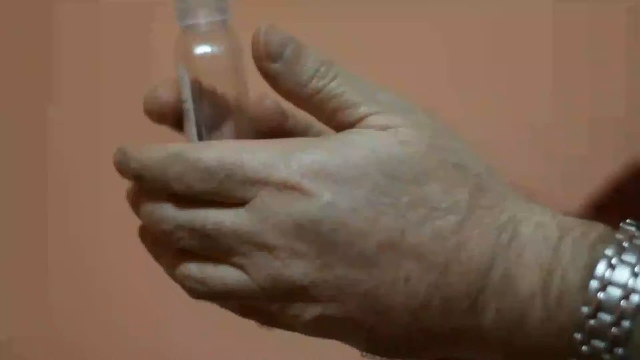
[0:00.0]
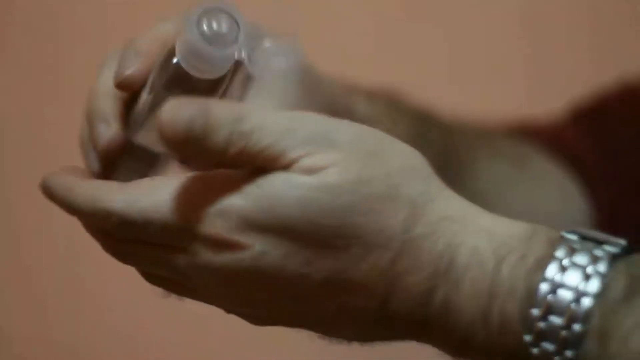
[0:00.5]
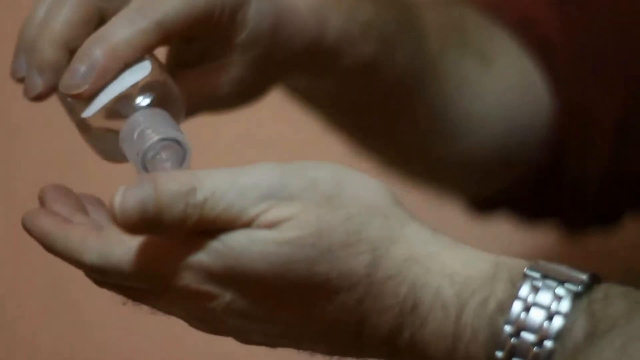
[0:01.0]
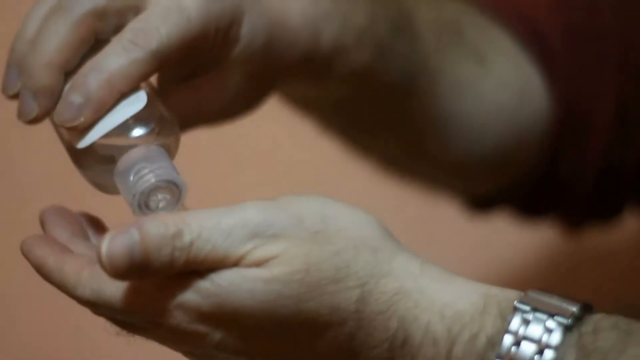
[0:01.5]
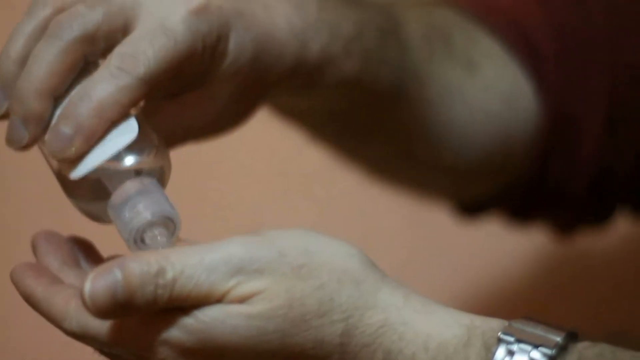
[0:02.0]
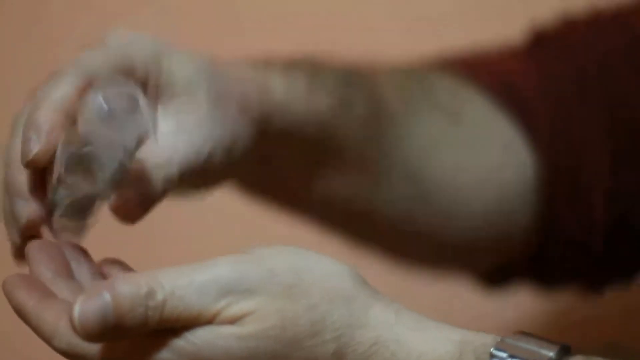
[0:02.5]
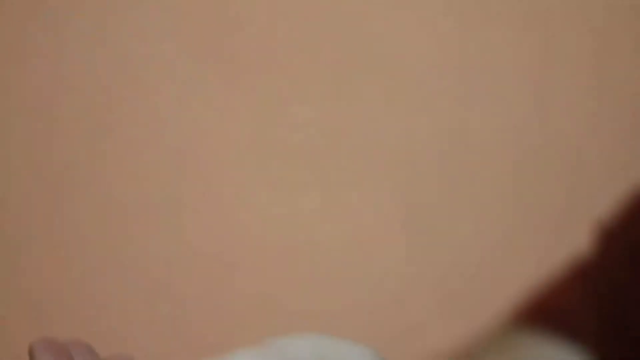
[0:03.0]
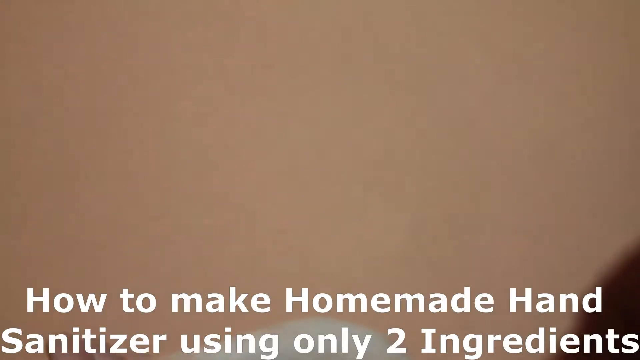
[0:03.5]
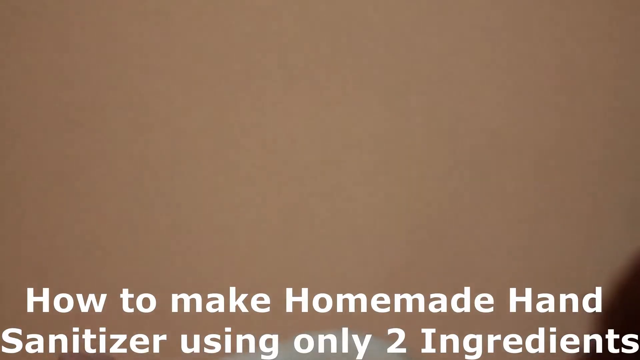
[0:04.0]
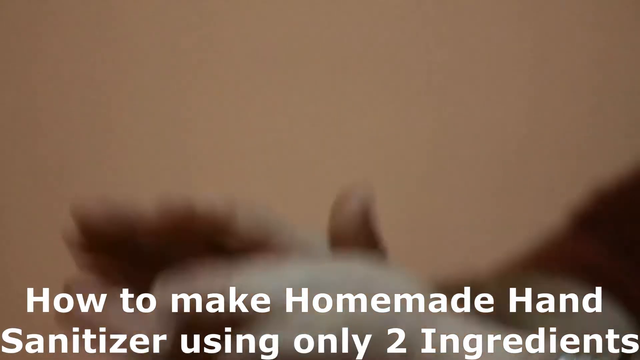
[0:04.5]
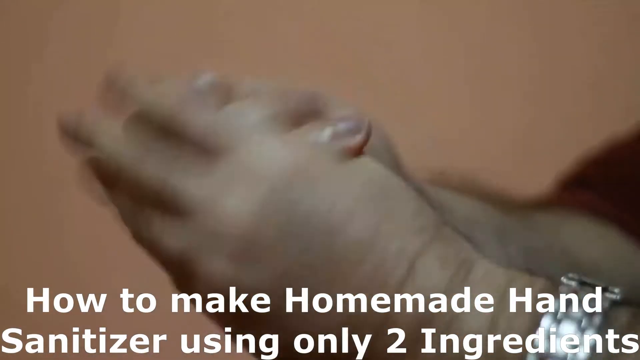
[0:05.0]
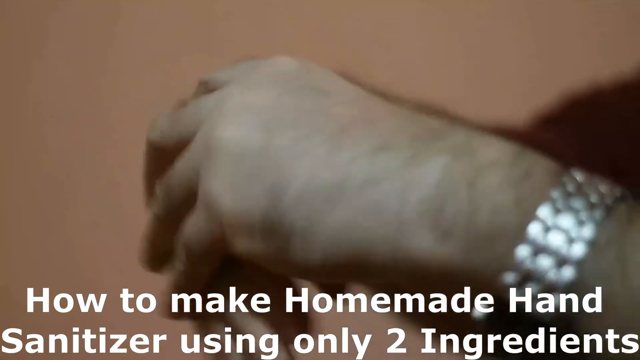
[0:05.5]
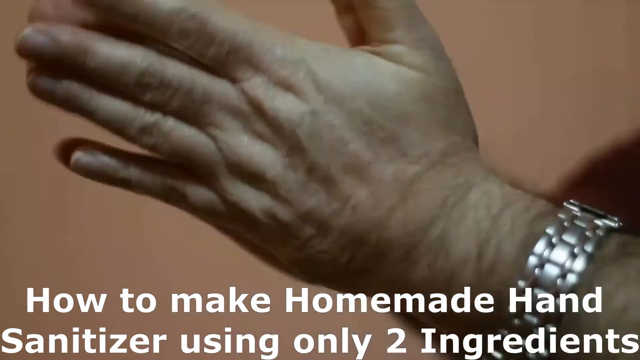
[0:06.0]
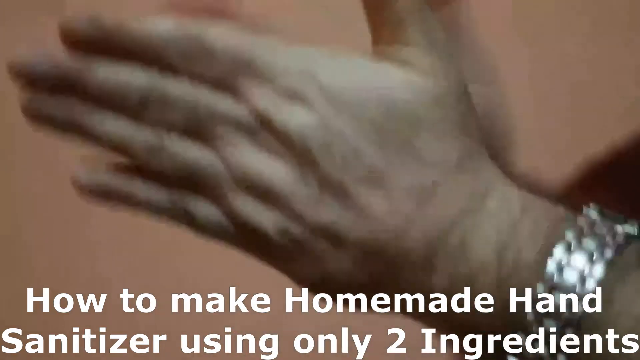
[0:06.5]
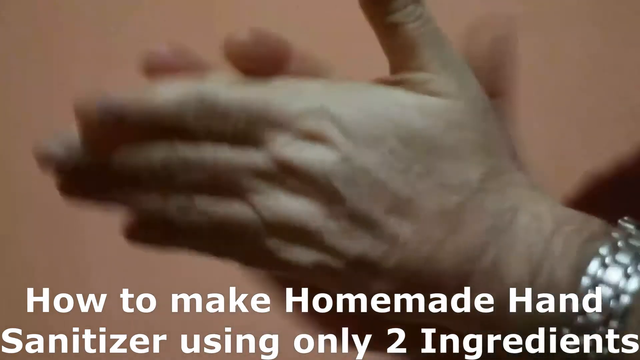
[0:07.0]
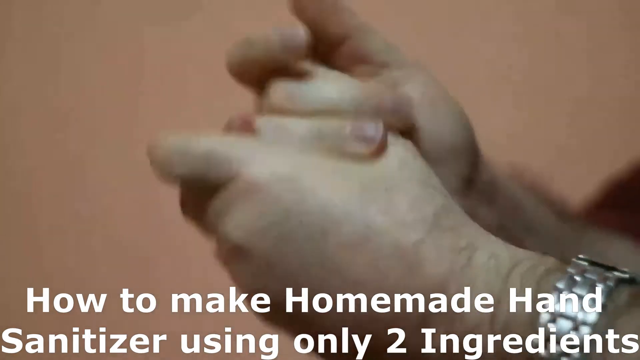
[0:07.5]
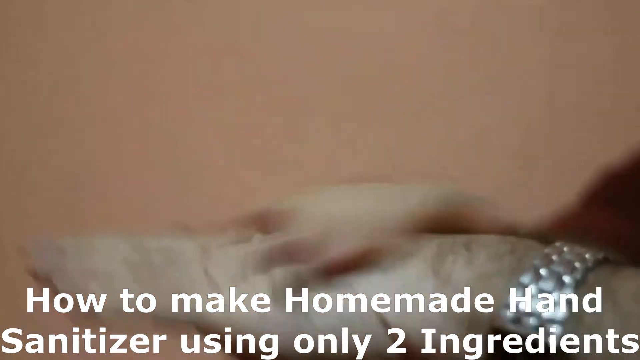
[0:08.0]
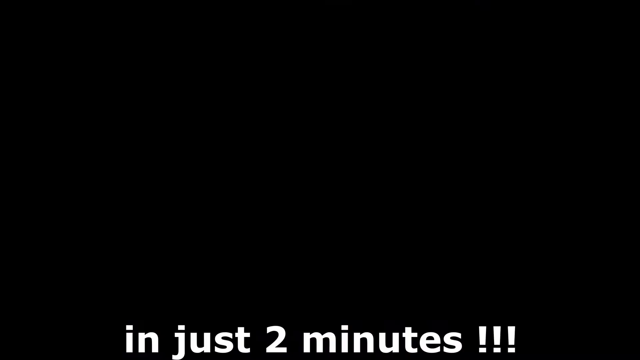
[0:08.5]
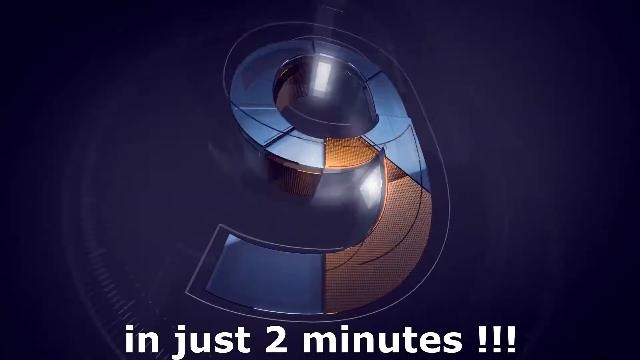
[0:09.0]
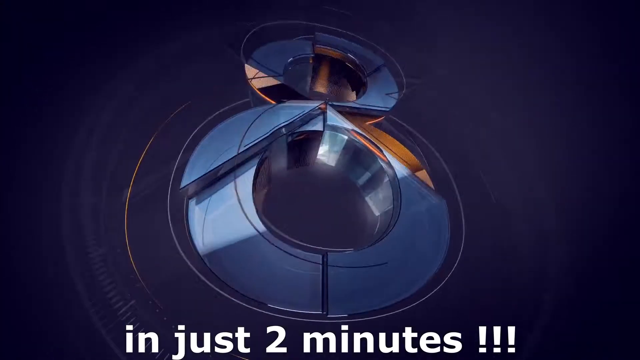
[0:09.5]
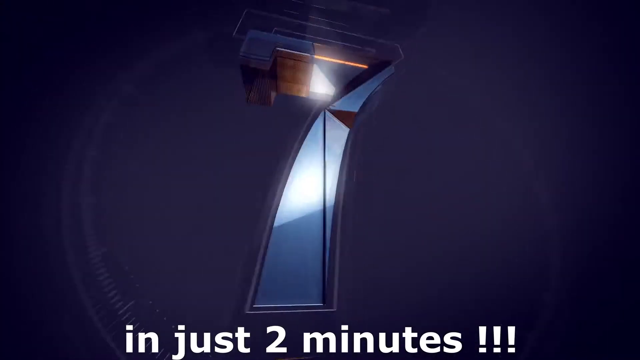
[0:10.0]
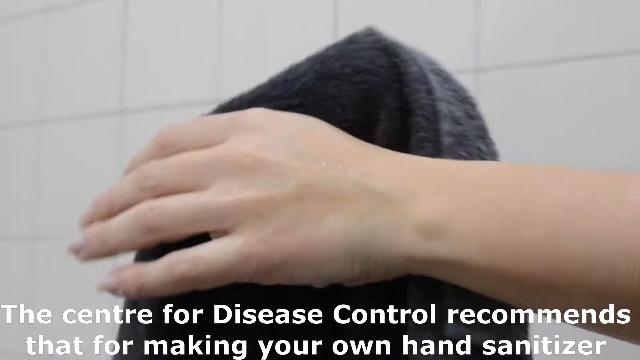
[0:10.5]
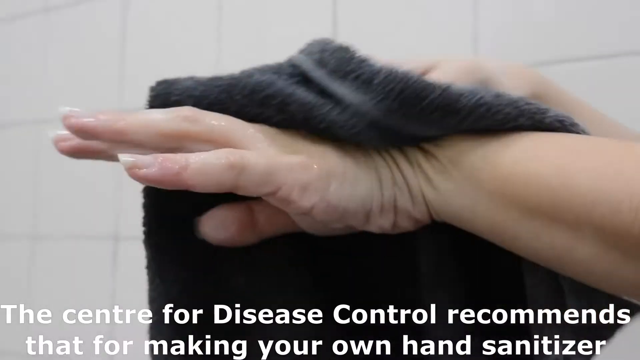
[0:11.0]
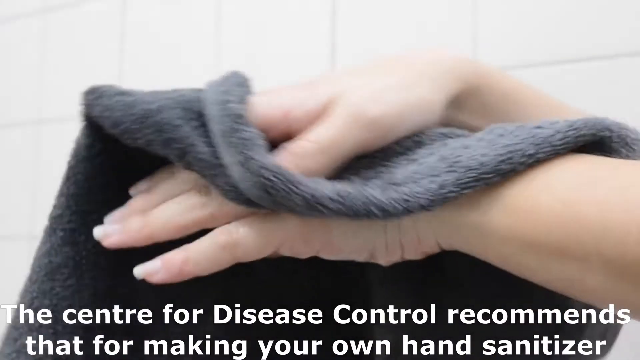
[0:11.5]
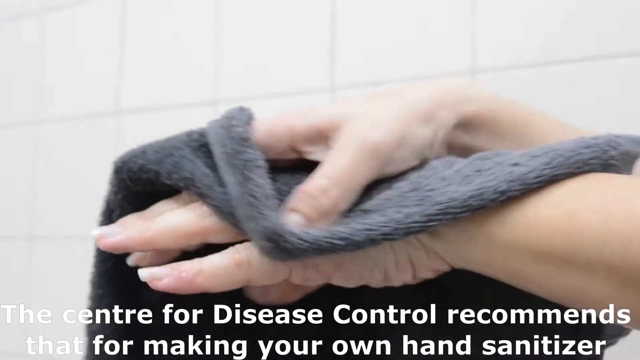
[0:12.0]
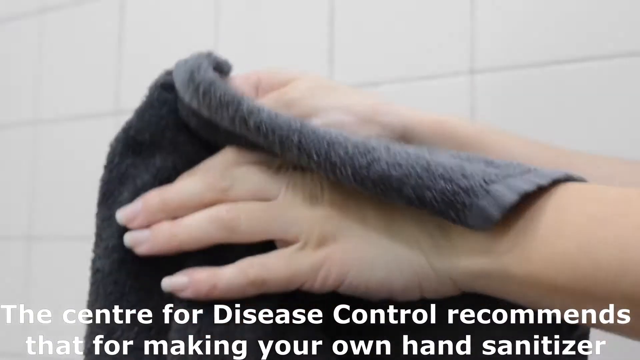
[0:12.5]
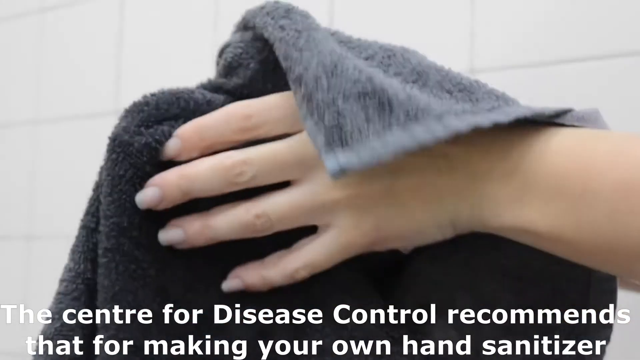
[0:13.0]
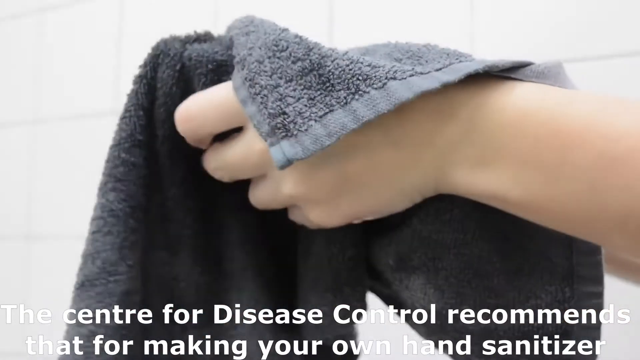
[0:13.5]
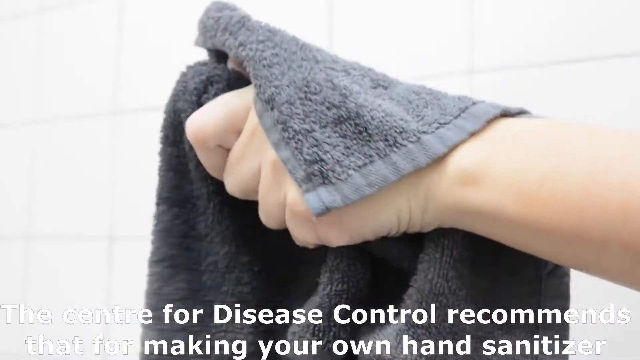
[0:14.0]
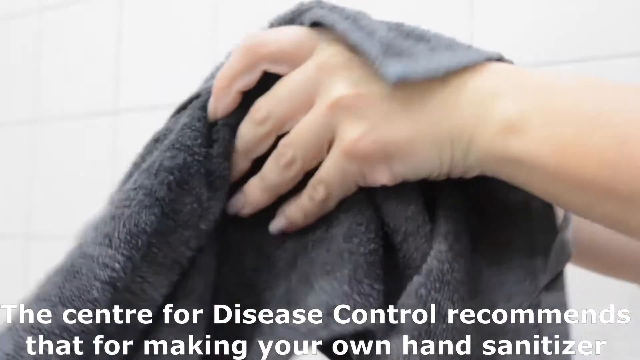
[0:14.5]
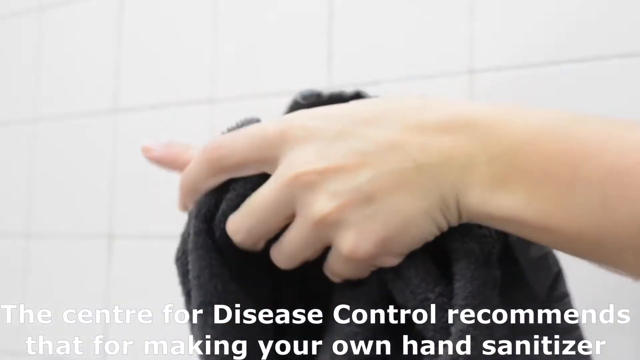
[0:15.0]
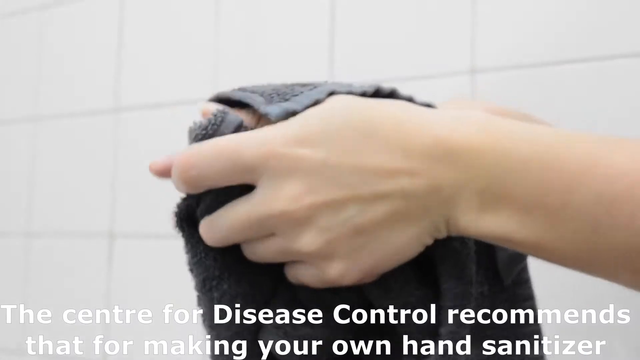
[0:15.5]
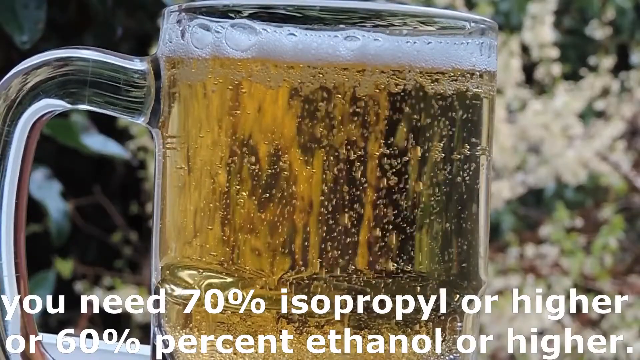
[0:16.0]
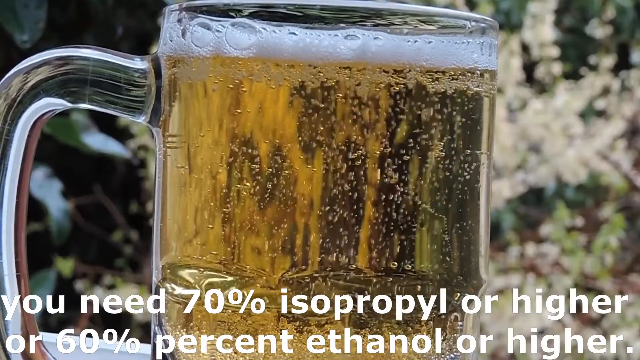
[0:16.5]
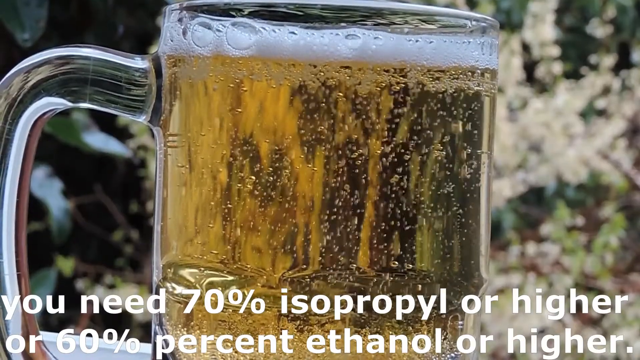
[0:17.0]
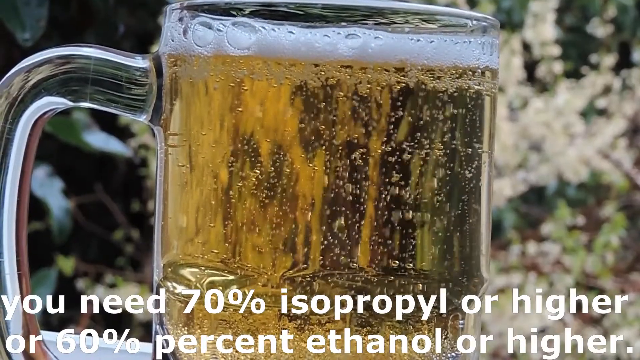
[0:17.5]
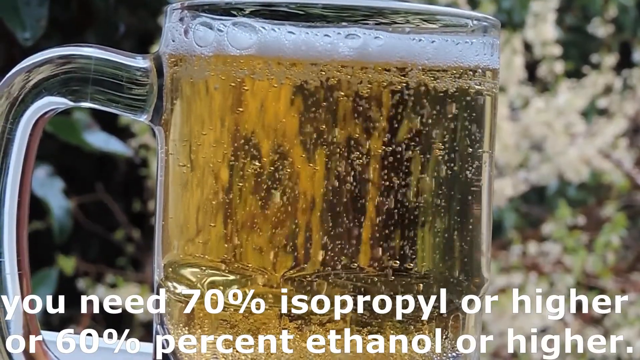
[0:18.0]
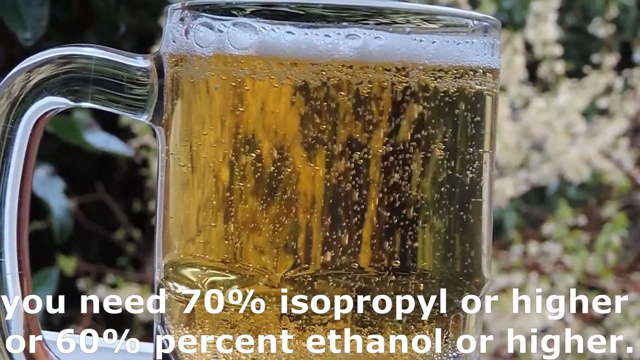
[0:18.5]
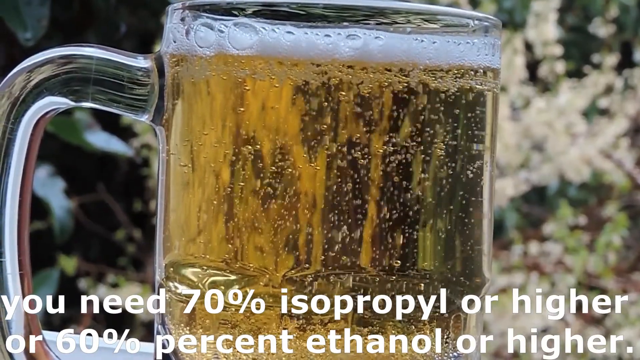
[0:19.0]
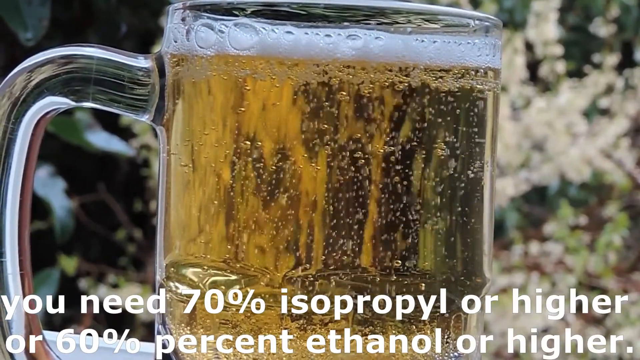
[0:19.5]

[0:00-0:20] A person applies something to their hands and washes them with it. On their left hand they wear a silver metal watch. Text at the bottom of the screen reads "How to make homemade hand sanitizer using only two ingredients." The person washes their hands vigorously, and a countdown appears showing 9, 8, 7. The video then switches to the person drying their hands with a towel. Next, a full transparent cup appears, containing a goldish solution that looks like beer. Text behind it reads "you need 70% isopropyl or higher or 60% ethanol or higher." The fluid in the cup is actively foaming, with bubbles rising from the bottom of the cup up to the surface.